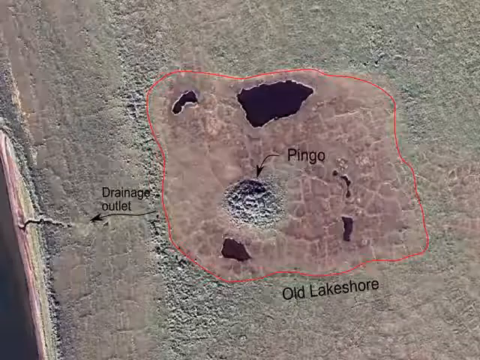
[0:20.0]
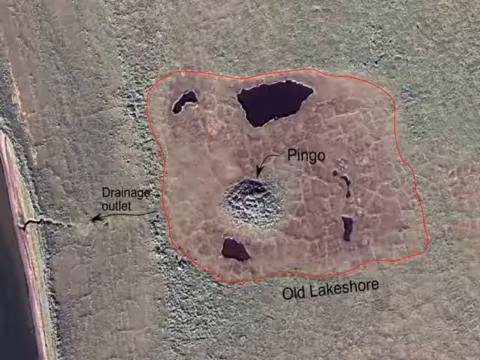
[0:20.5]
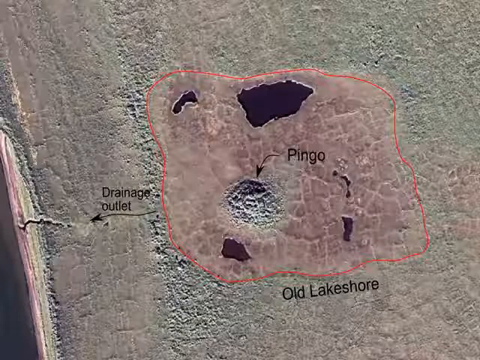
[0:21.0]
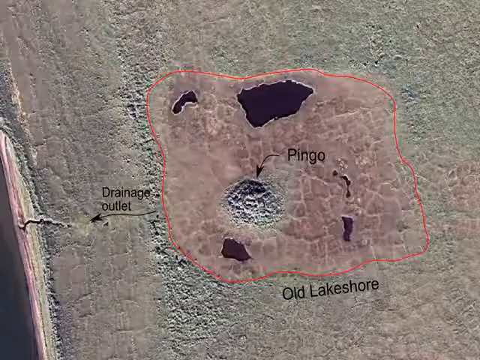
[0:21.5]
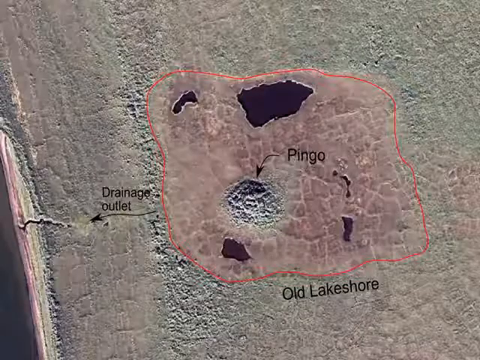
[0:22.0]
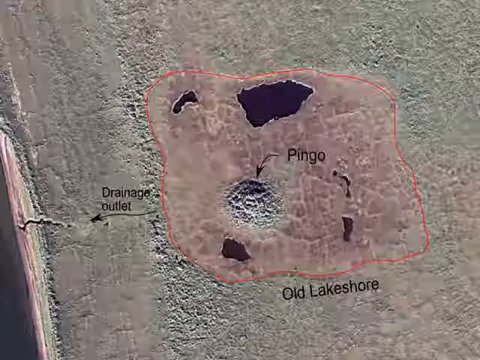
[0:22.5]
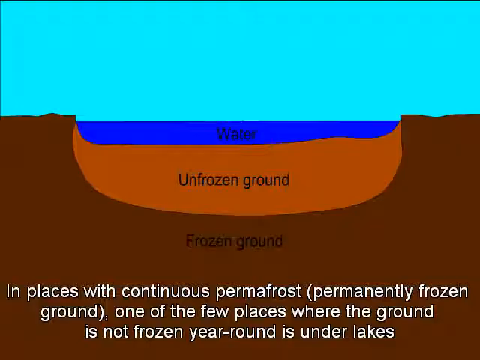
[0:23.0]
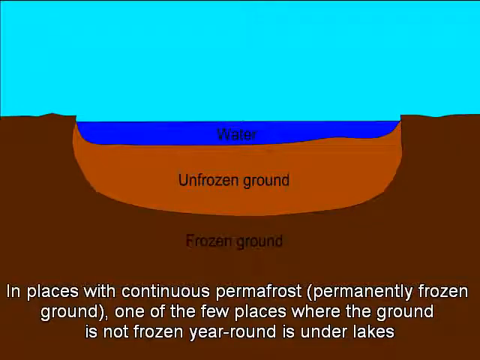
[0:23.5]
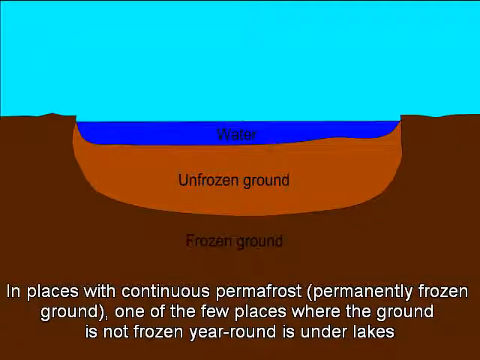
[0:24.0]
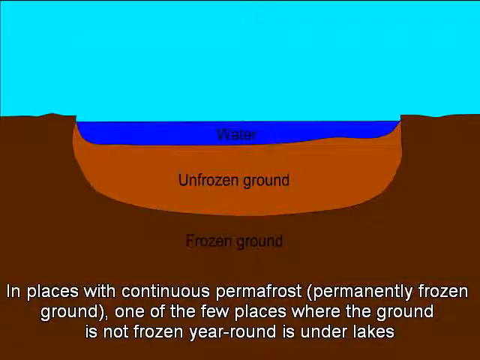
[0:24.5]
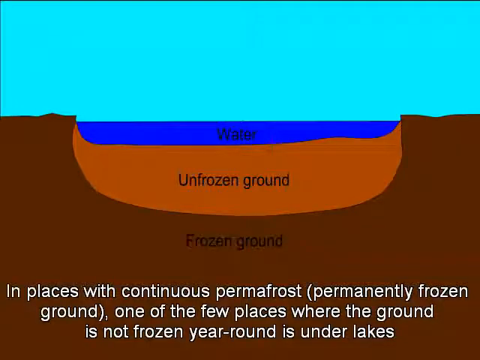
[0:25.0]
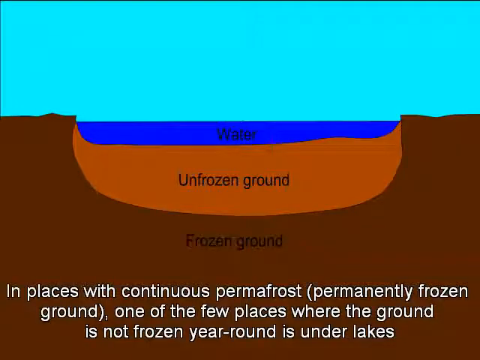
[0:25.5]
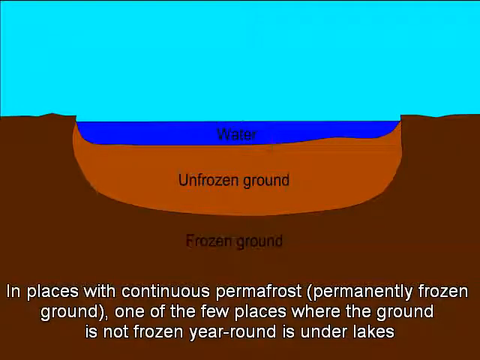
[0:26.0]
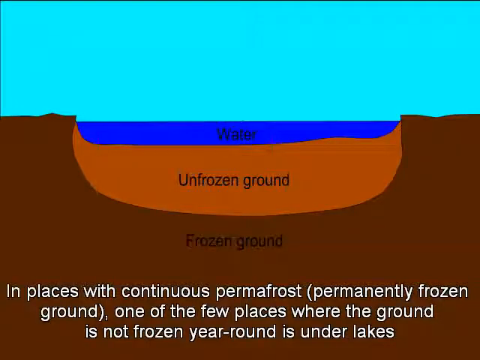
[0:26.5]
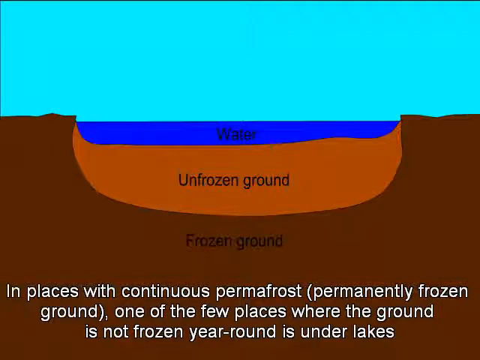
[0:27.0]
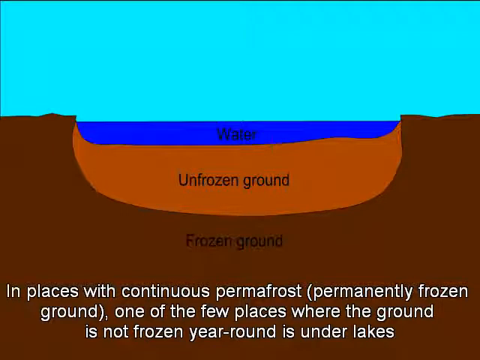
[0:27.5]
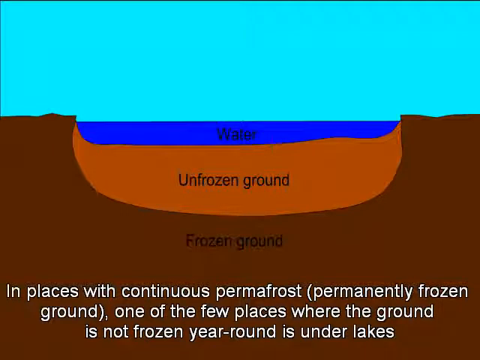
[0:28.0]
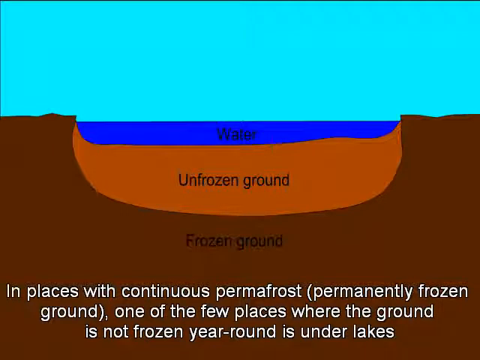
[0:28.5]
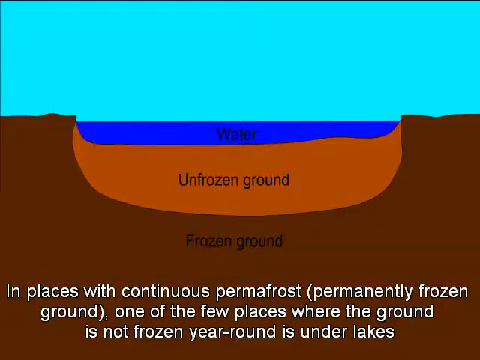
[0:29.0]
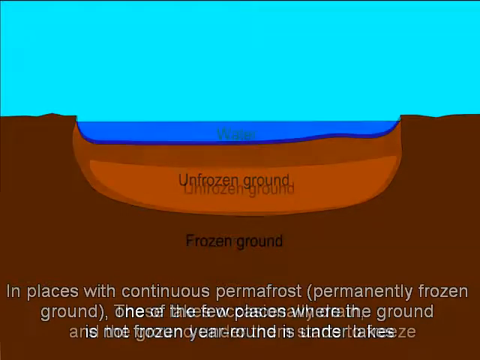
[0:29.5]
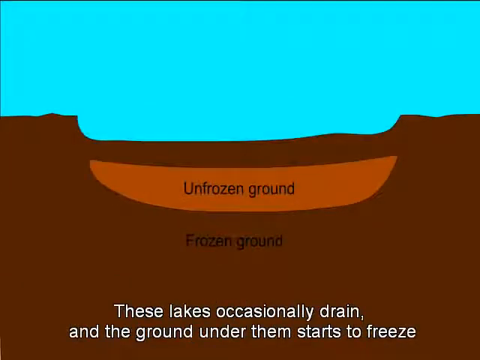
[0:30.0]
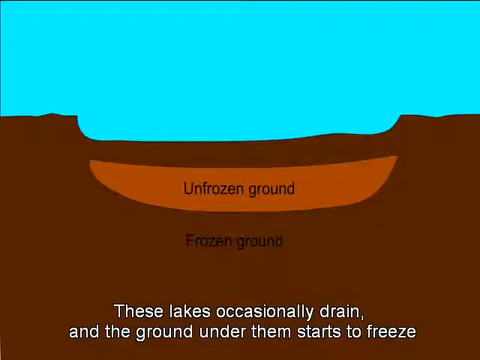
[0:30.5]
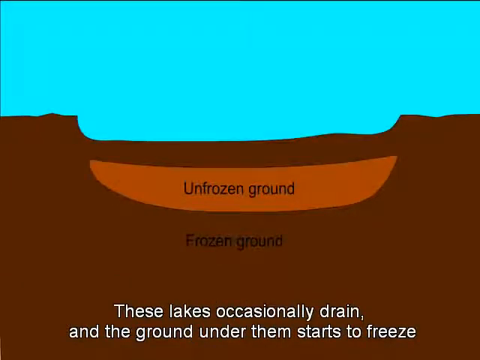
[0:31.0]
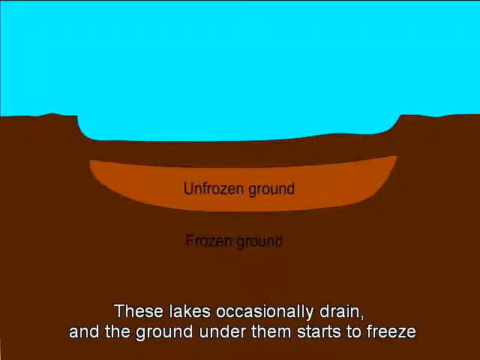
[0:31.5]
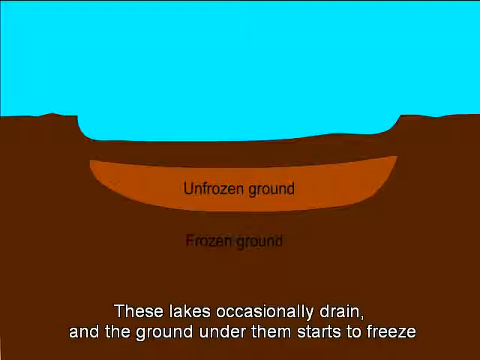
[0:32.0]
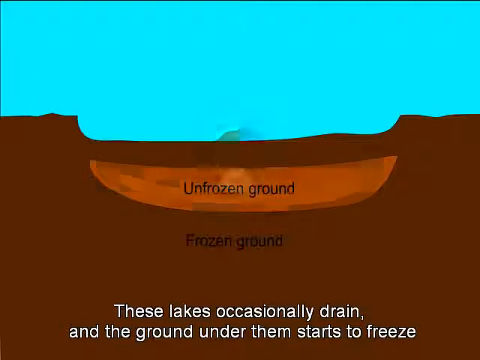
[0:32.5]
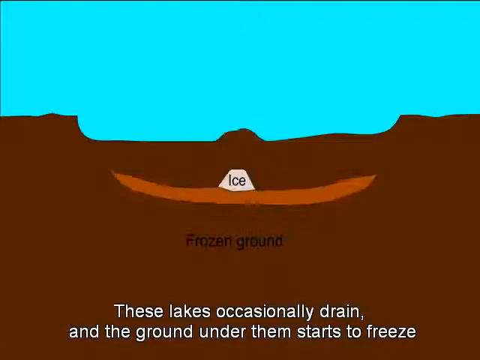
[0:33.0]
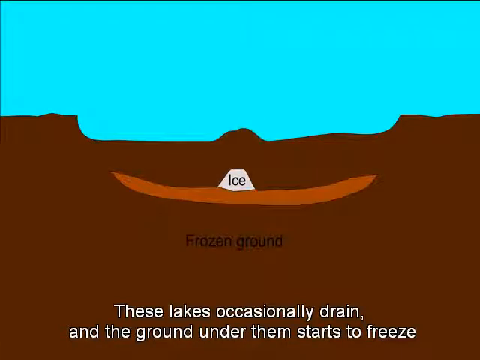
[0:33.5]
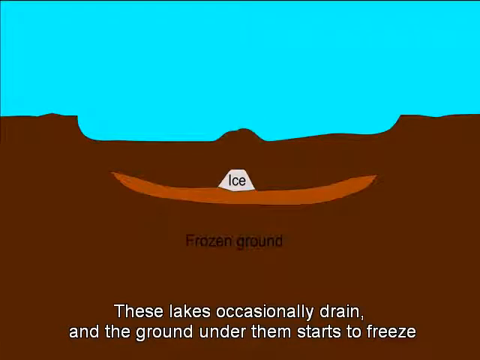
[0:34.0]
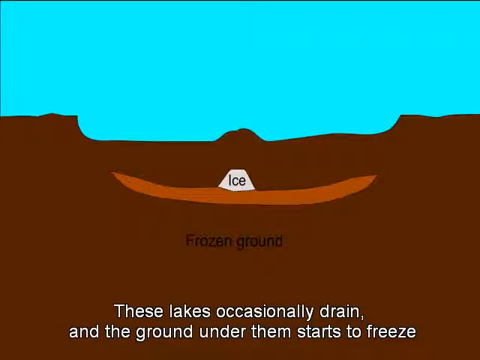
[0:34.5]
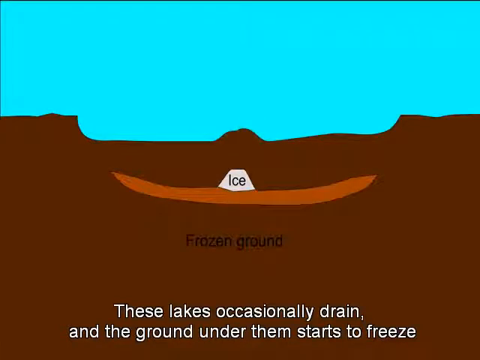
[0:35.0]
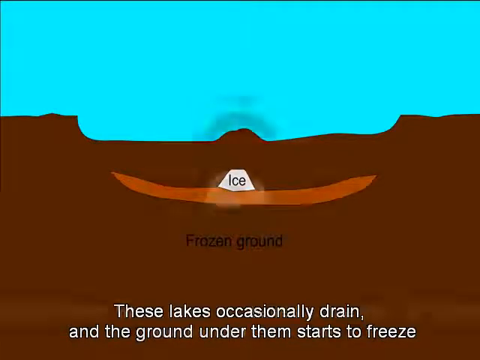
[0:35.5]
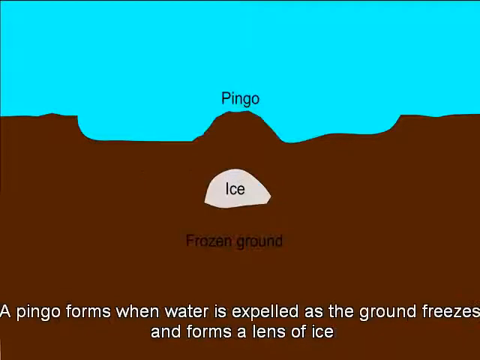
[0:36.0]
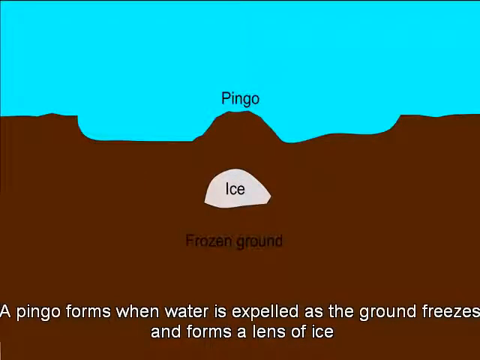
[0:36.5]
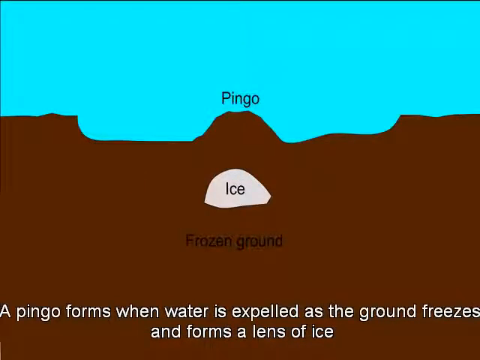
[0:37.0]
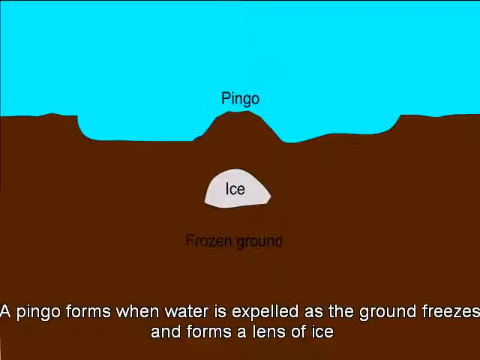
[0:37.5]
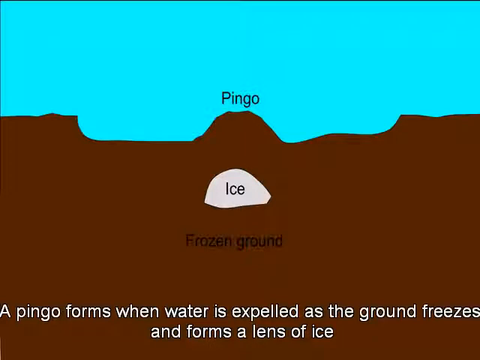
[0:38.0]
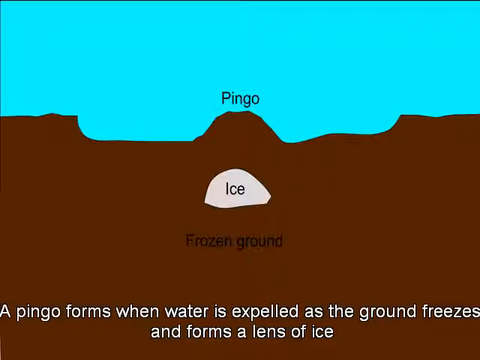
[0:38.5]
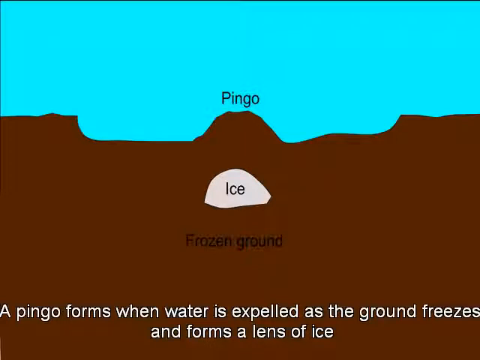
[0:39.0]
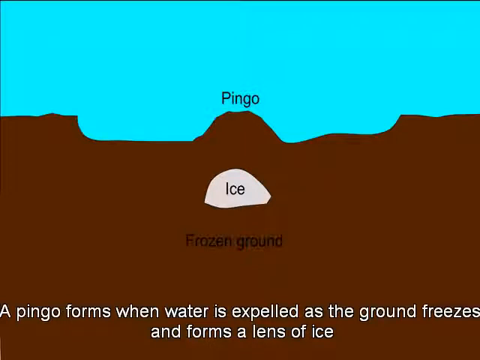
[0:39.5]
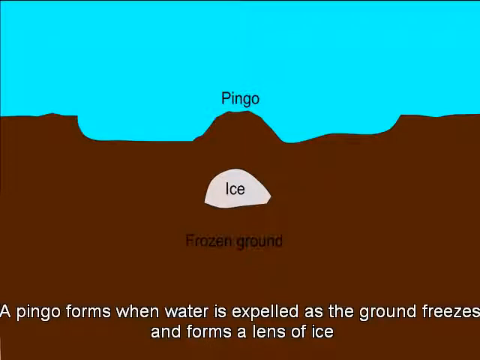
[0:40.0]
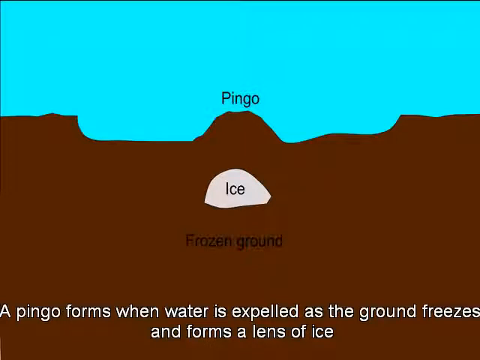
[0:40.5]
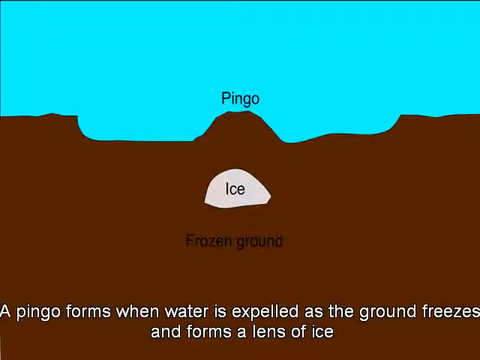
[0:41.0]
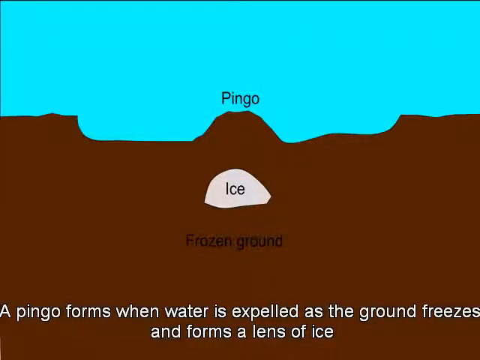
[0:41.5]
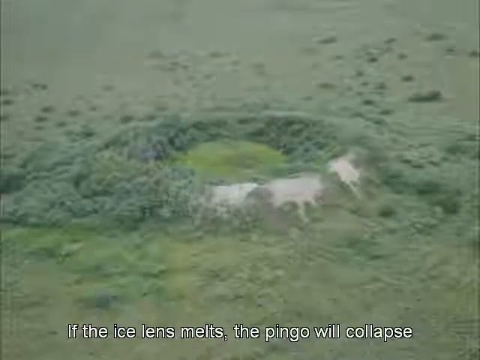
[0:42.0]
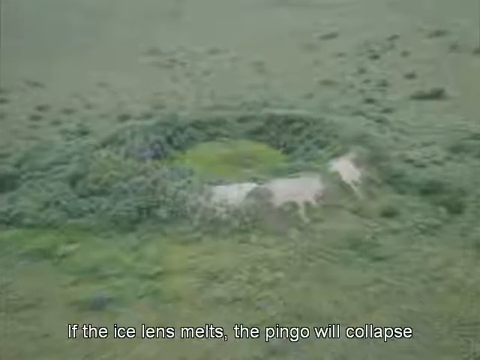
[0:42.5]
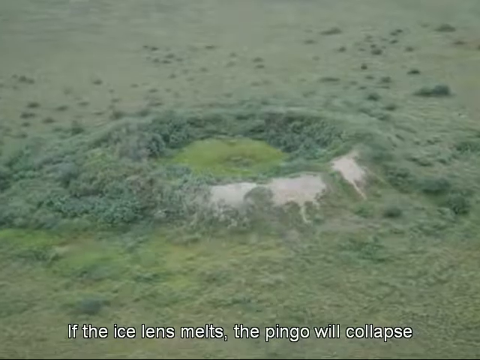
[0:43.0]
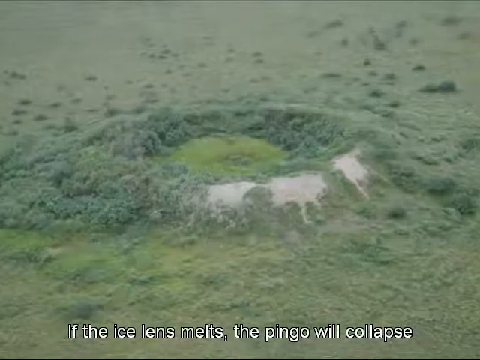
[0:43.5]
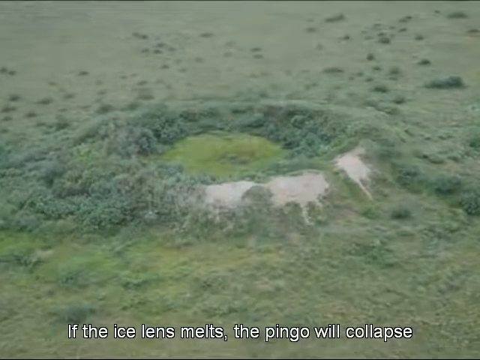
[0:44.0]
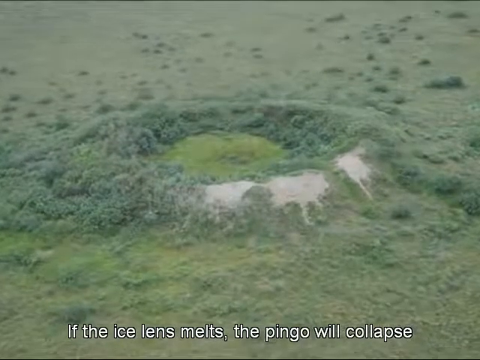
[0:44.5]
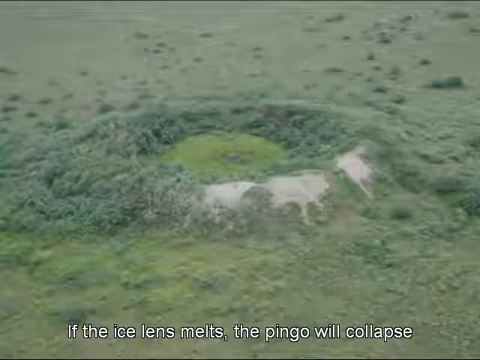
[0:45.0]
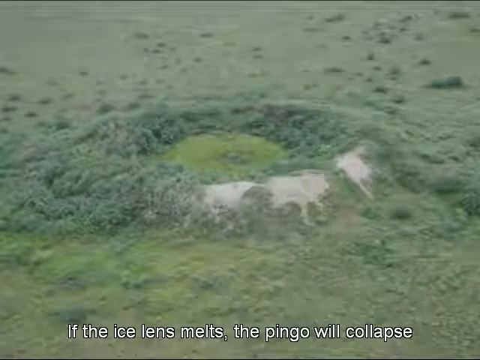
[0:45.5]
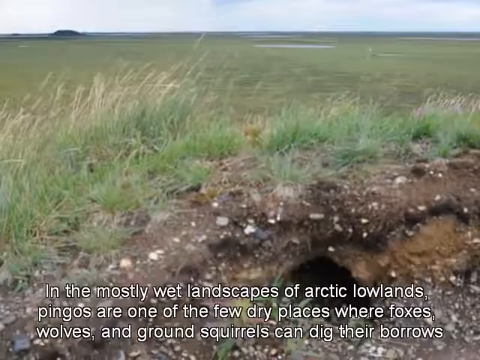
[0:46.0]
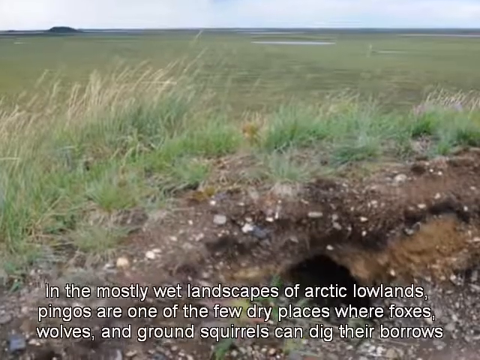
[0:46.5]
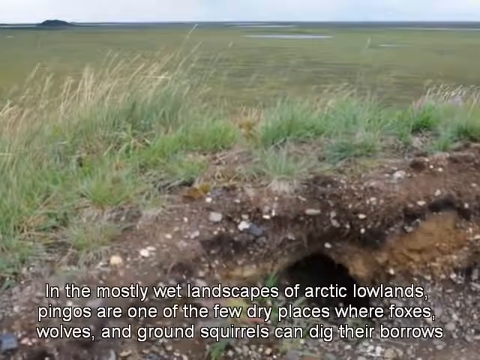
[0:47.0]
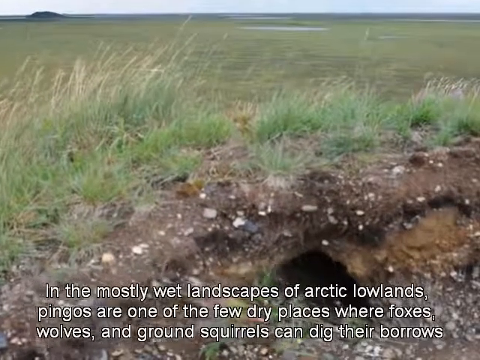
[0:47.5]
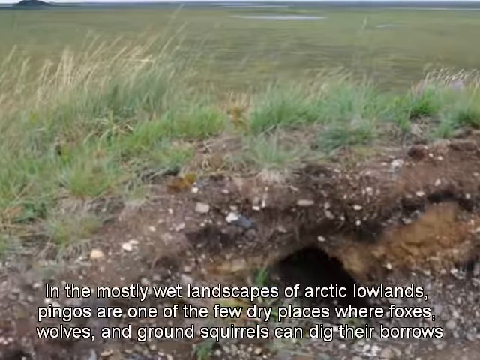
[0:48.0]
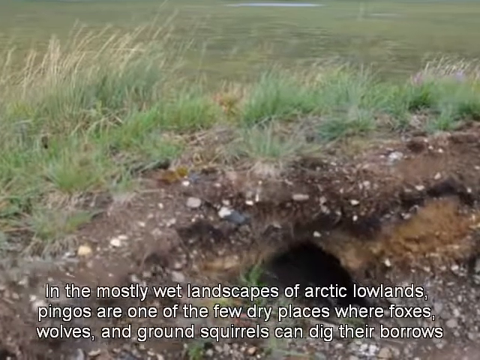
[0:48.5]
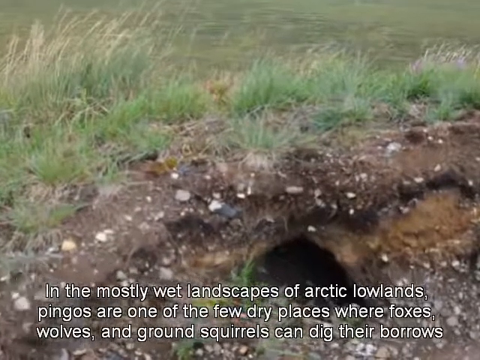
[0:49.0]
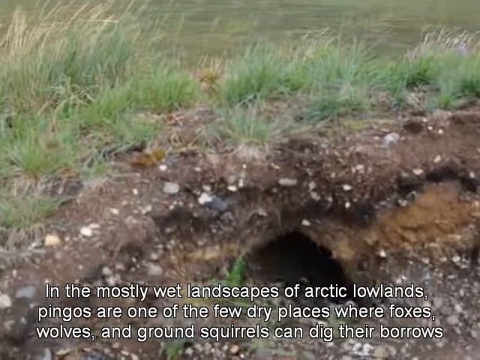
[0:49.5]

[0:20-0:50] A satellite view of Alaska shows a pingo with a red outline surrounding it, the label "Old Lakeshore," and an arrow pointing to the left side of the screen labeled "drainage outlet." A schematic of the ground formations follows: brown ground with a hole containing water, unfrozen ground beneath it, and frozen ground beneath that. Subtitles read "In places with continuous permafrost, permanently frozen ground, one of the few places where the ground is not frozen year-round is under lakes. These lakes occasionally drain and the ground under them starts to freeze. A pingo forms when water is expelled as the ground freezes and forms a lens of ice." In the diagram, as the water goes away, frozen ground builds up on top of the unfrozen ground. Ice then forms and a brown formation appears, apparently the pingo.